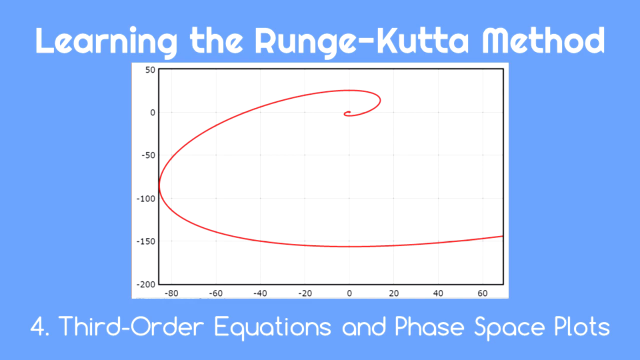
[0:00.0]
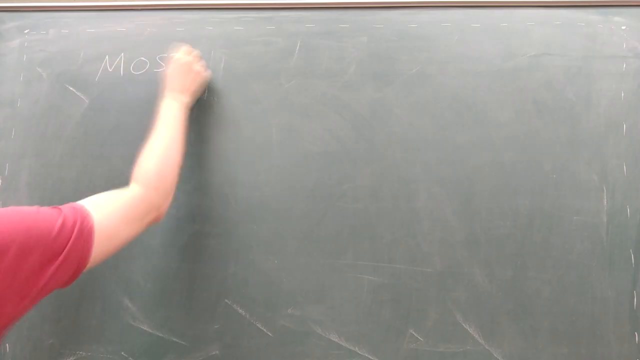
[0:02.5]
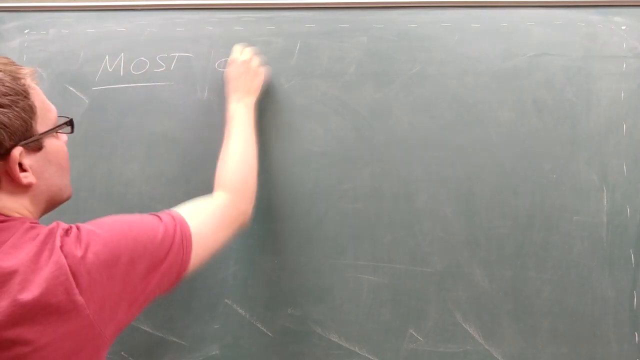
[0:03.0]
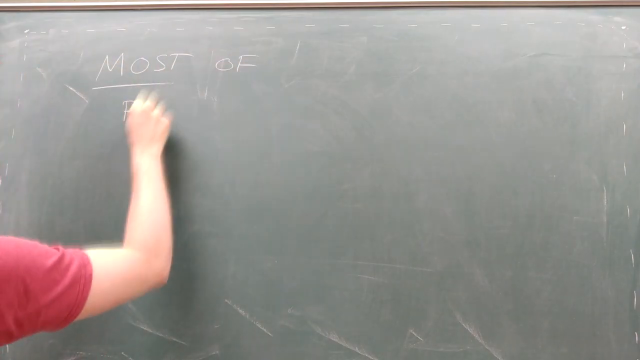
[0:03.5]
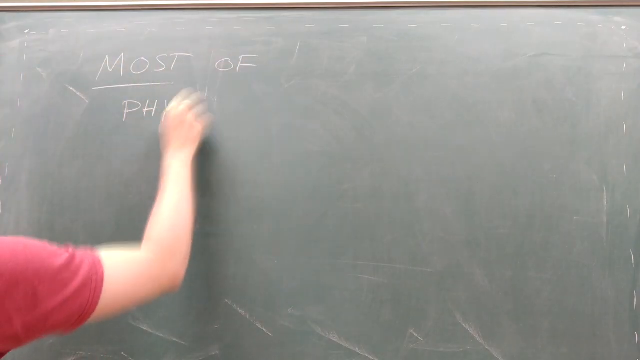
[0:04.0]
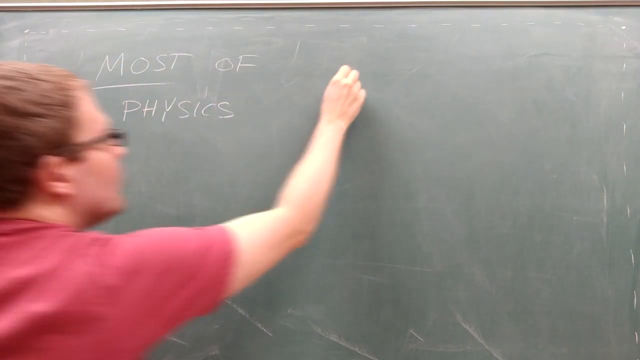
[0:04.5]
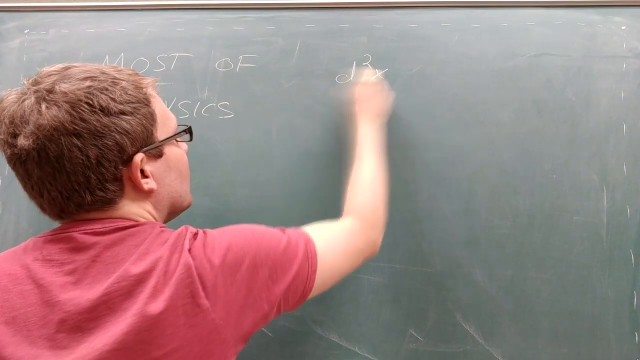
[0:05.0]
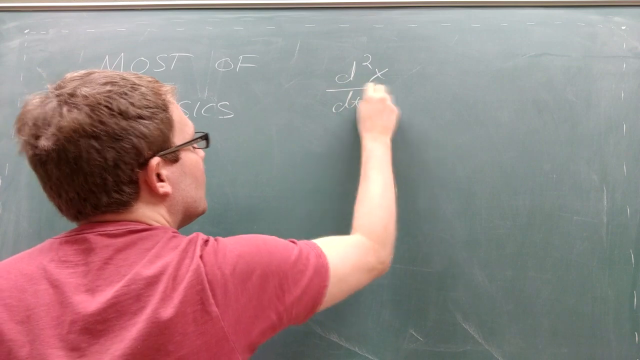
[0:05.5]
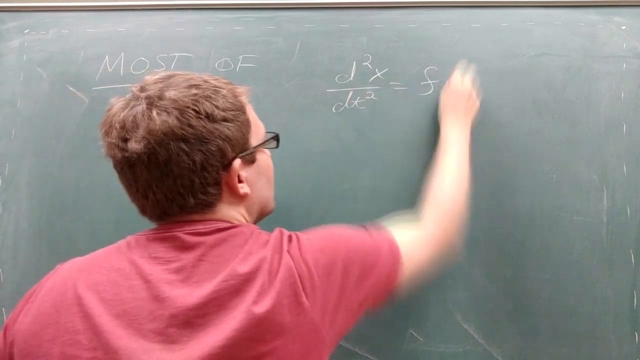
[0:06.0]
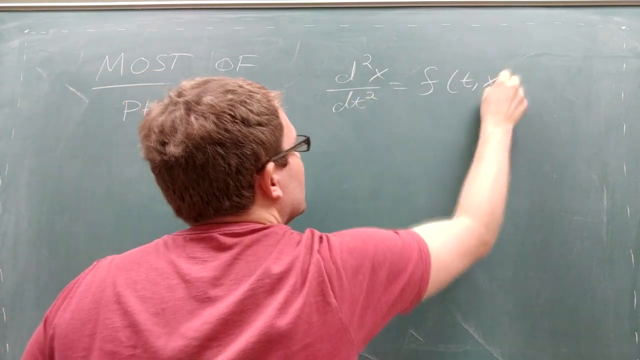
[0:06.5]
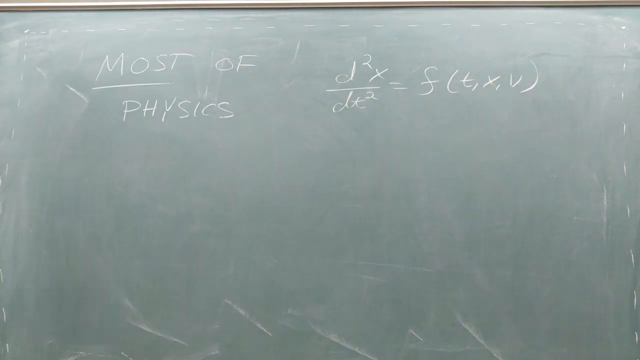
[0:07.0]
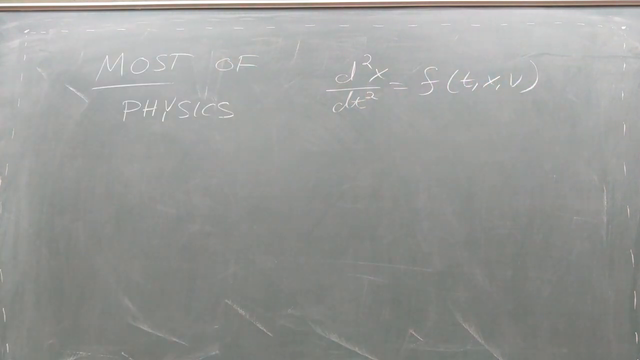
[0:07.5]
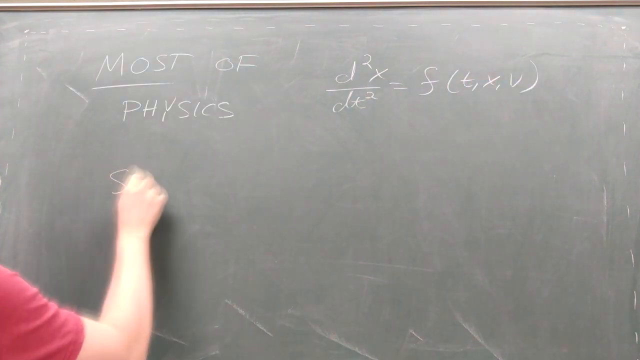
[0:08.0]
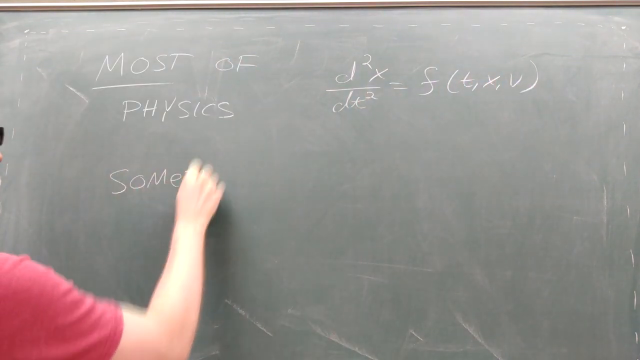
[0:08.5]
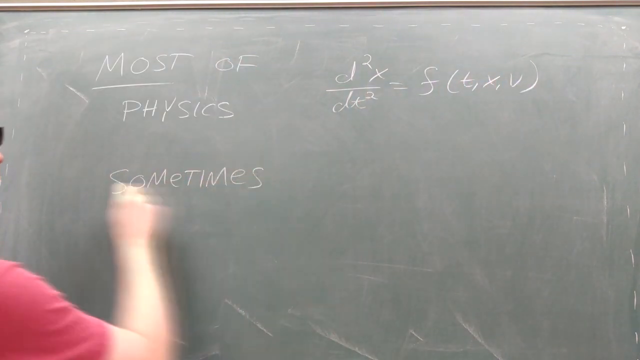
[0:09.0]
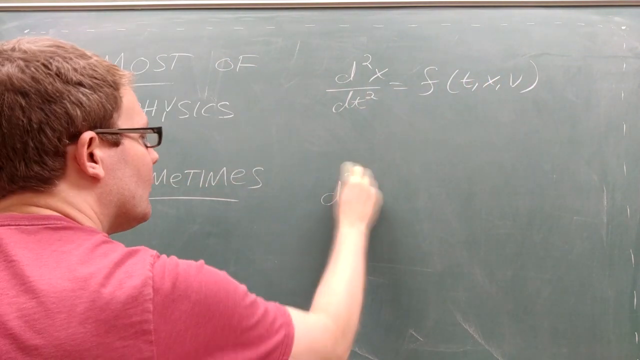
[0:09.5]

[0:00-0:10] The video opens with a title reading "Learning the Runge-Kutta Method." Below it on the screen is a white diagram, a graph whose x-axis runs from minus 200 to 50 and whose y-axis runs from minus 80 to 60. A plot that looks like a red curl spirals in on itself; it touches the y-axis at one point and does not touch the x-axis at all. The graph remains on screen for a few seconds. Then a man appears, shown sped up. He holds a piece of chalk in his right hand with his elbow at a right angle and writes very quickly. He wears glasses, has short hair and is quite young. He has written "most of physics" followed by d2x/dx2 = f(t, x, v), which would seem to be the second differential.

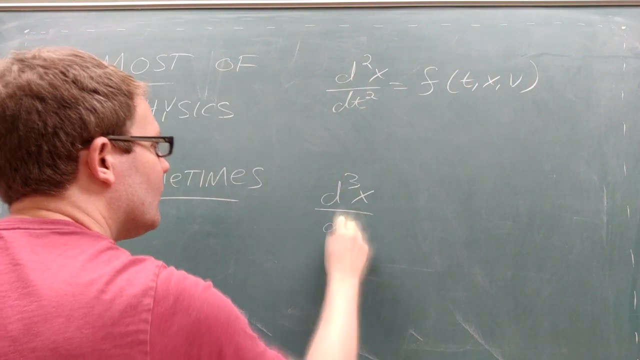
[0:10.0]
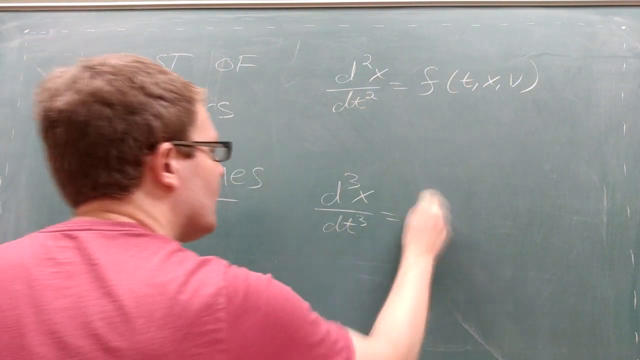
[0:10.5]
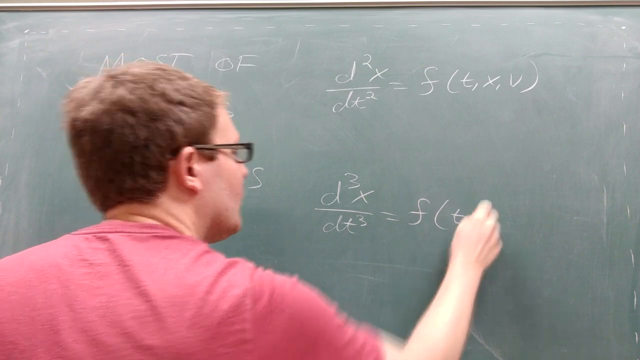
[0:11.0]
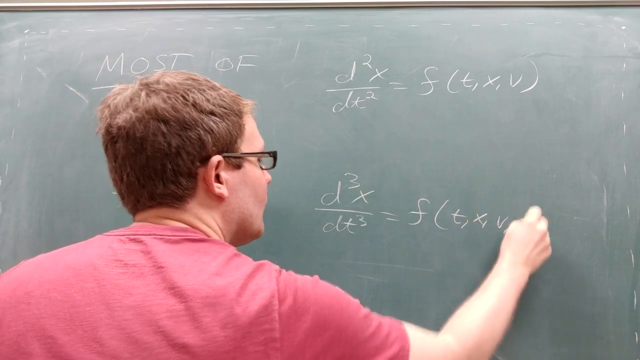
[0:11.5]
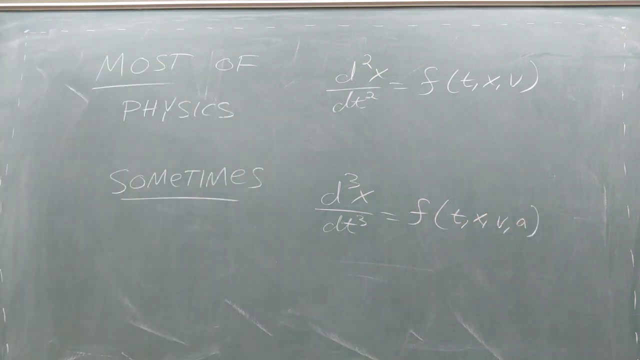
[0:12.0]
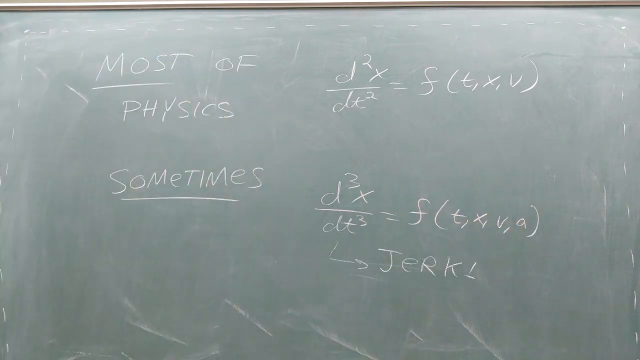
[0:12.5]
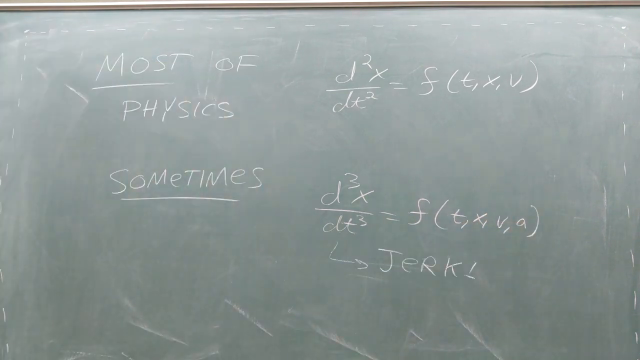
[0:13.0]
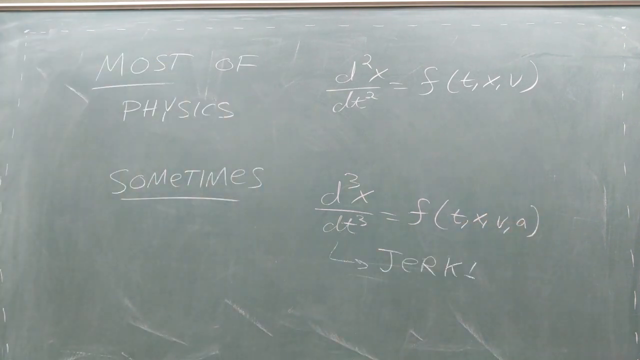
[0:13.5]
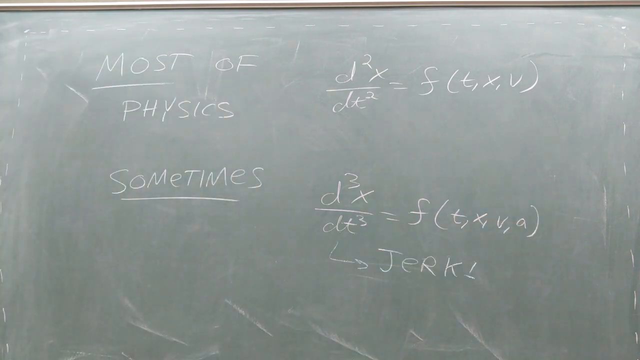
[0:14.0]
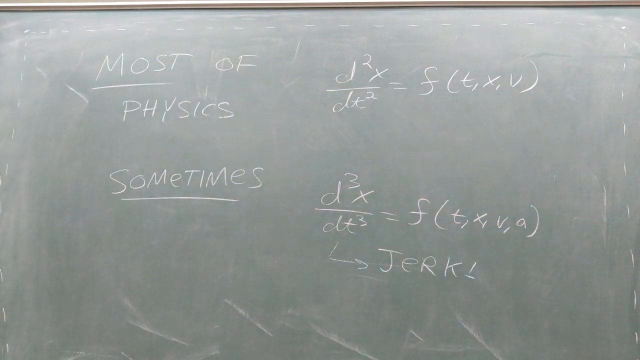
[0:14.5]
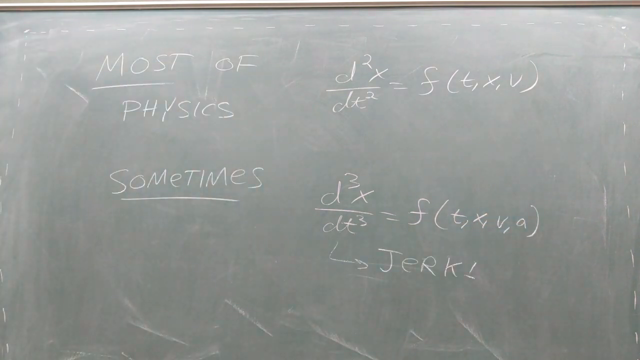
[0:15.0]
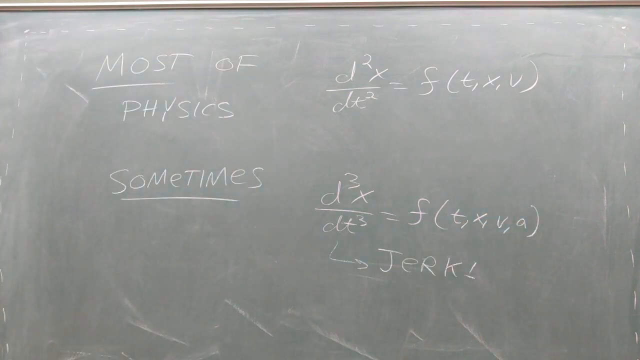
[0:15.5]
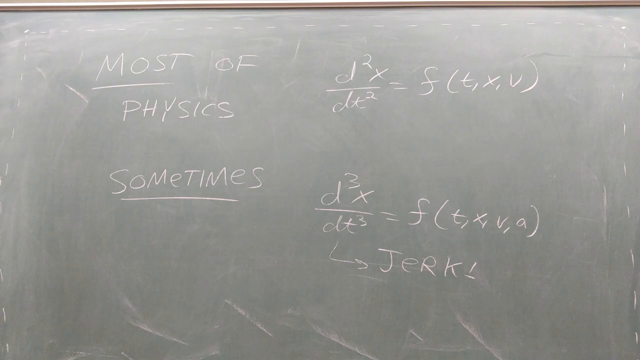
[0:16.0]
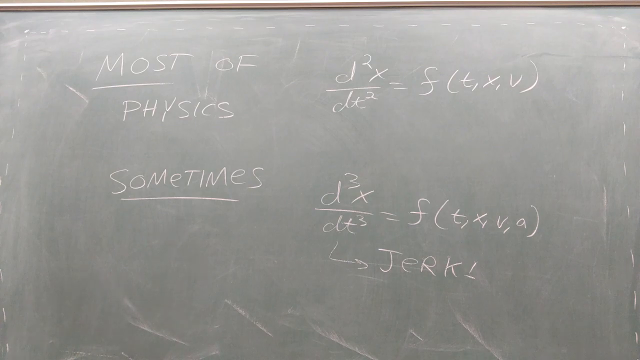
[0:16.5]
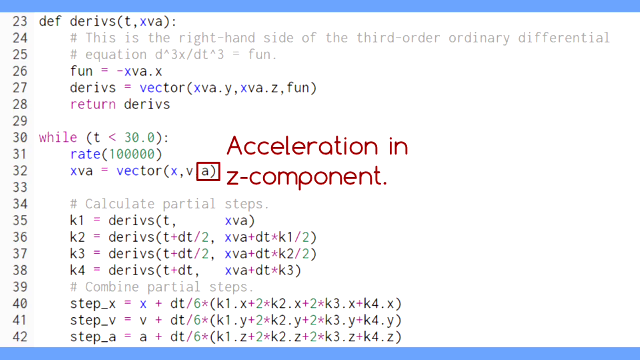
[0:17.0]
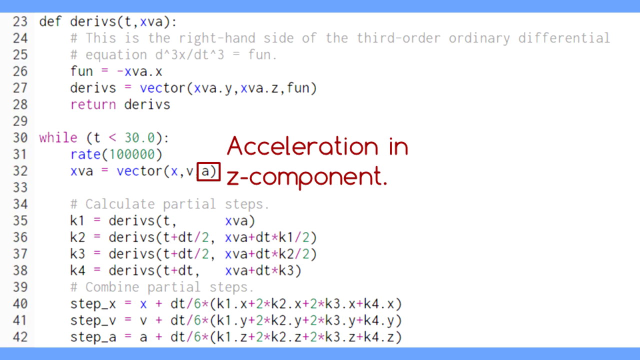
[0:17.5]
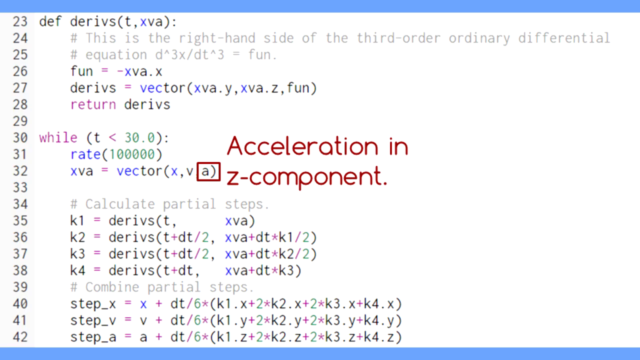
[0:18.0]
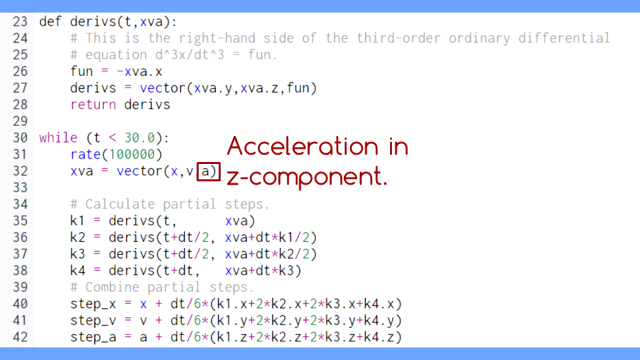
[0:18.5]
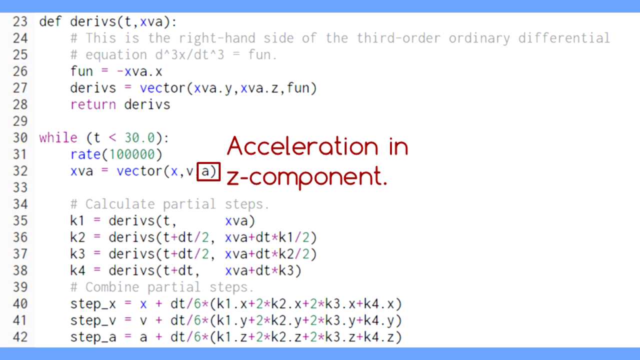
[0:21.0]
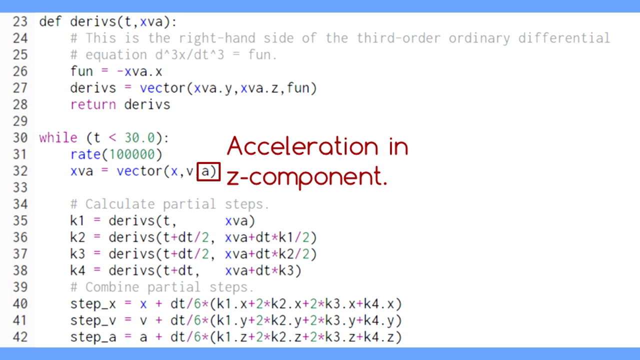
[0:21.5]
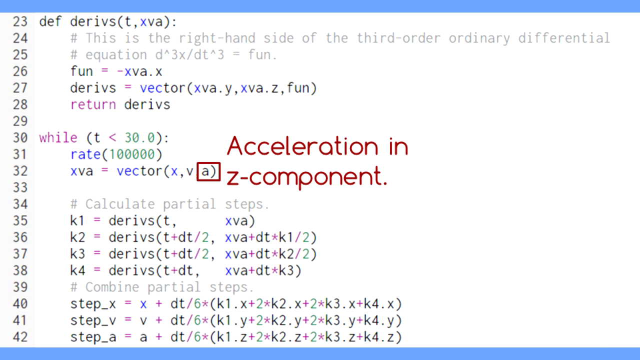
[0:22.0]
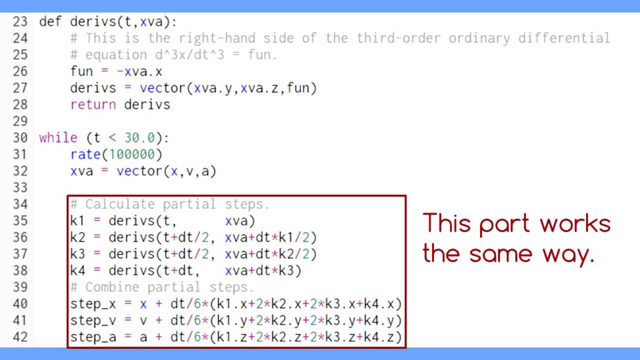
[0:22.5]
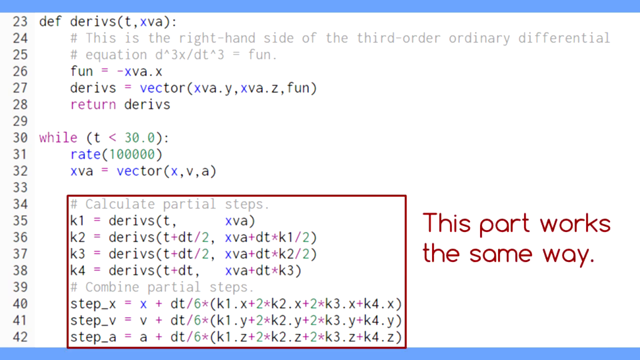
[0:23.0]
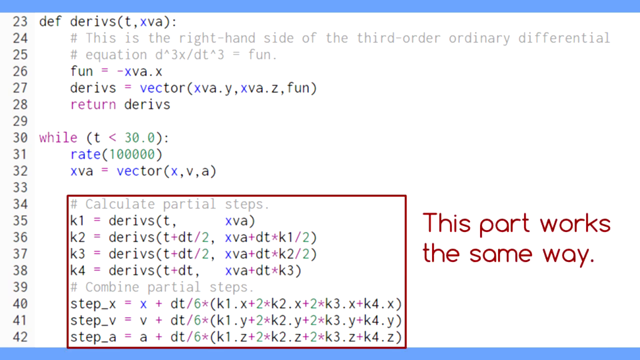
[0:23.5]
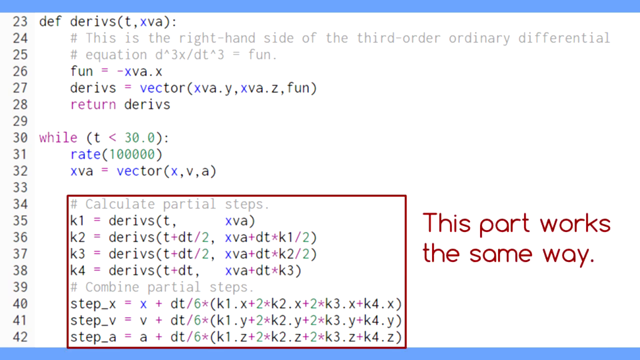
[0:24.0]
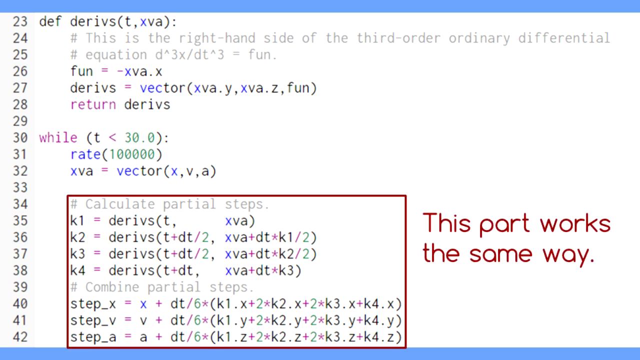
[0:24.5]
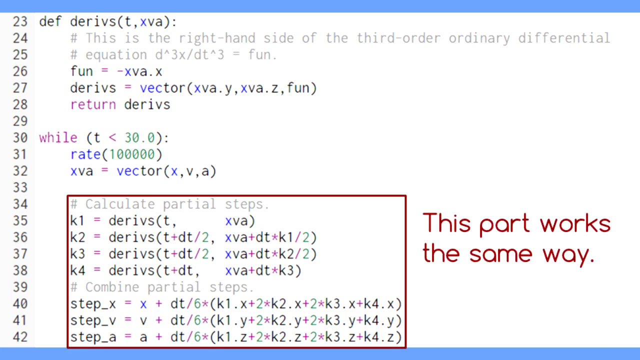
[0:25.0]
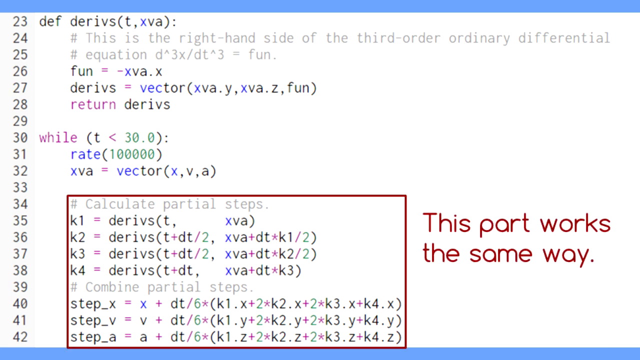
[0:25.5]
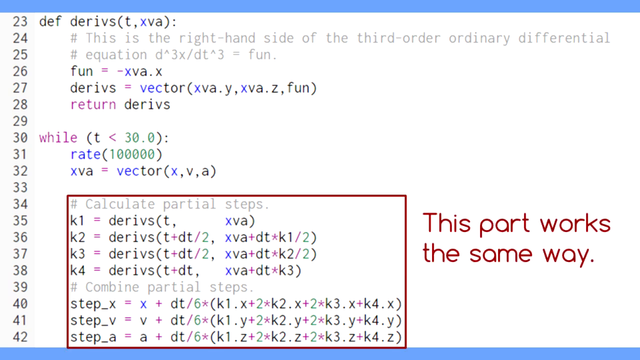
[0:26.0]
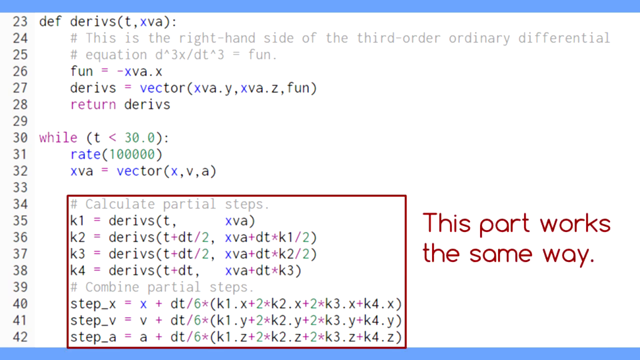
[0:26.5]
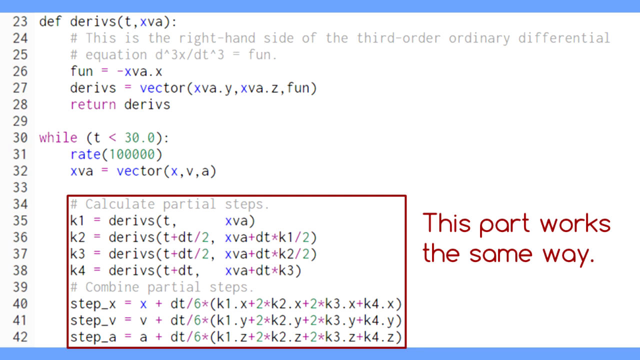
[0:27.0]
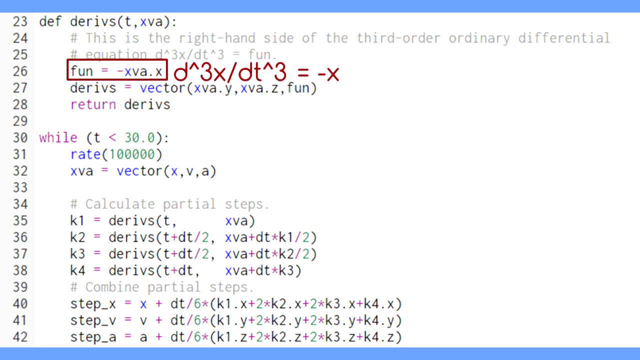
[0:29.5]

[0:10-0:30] The man continues writing on the chalkboard in white chalk. Next to the second differential labelled as what most of physics uses, he writes the third differential, d3x/dt3 = f(t, x, v, a), then draws an arrow underneath the equation and writes "JERK!" in capital letters. The screen shows the two differentials, then changes: "acceleration in the z component" appears in red in the center of the screen, along with a list of data and equations running down a script from line 23 to line 42. A box goes around the a where it says xva = vector xva, and a second part lower down works in exactly the same way.